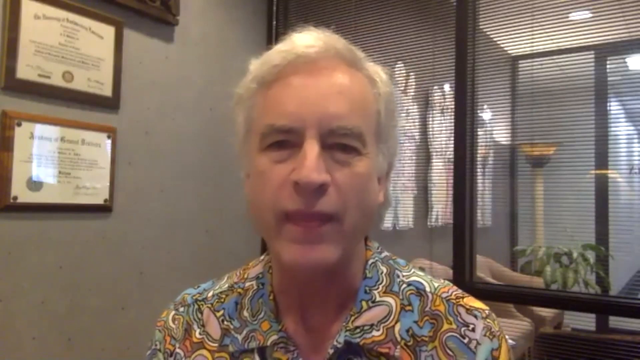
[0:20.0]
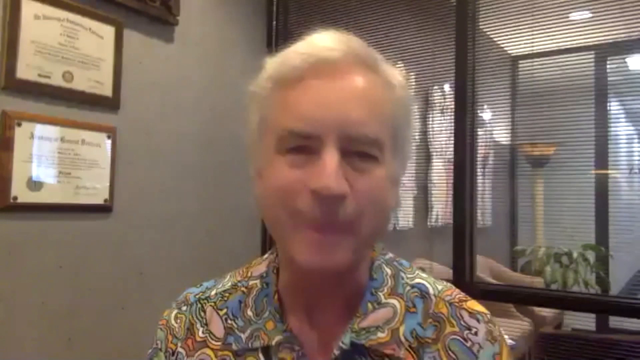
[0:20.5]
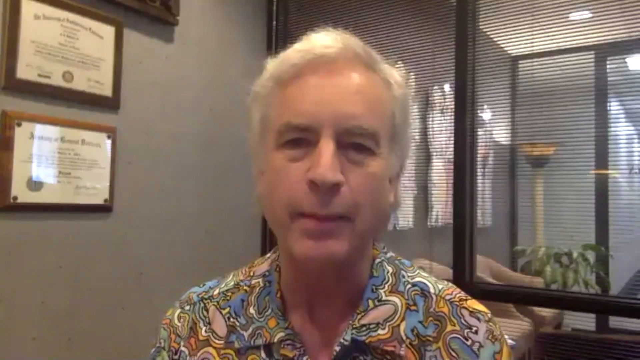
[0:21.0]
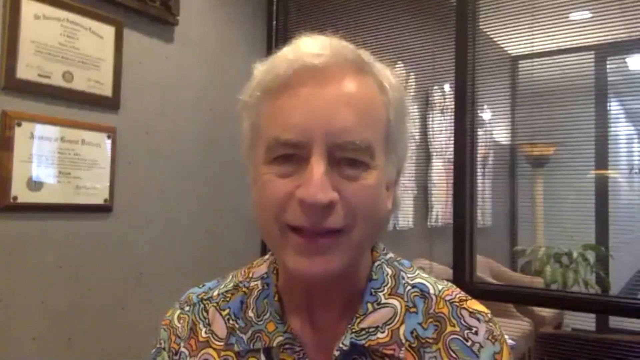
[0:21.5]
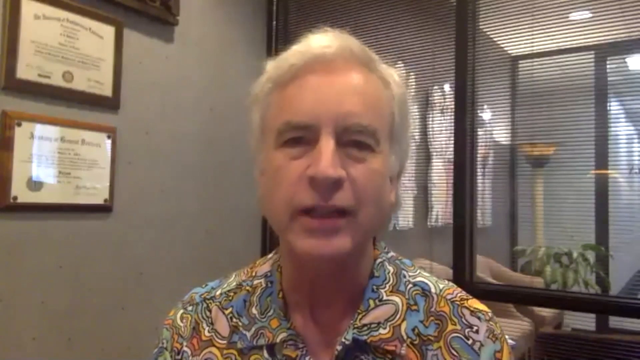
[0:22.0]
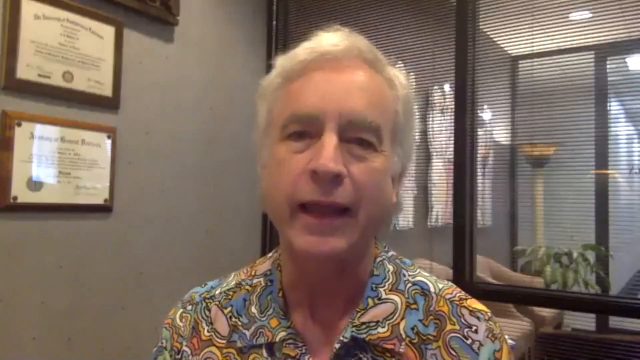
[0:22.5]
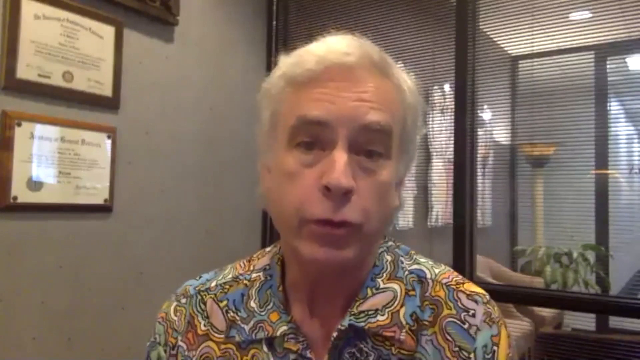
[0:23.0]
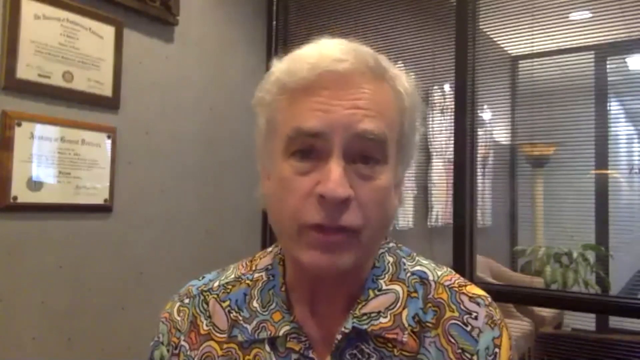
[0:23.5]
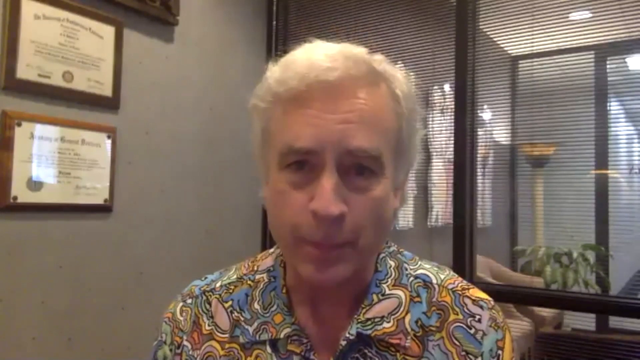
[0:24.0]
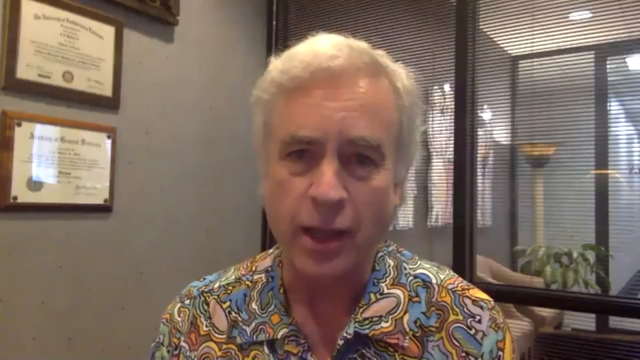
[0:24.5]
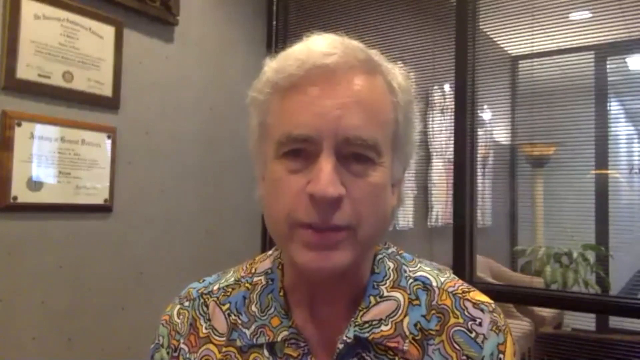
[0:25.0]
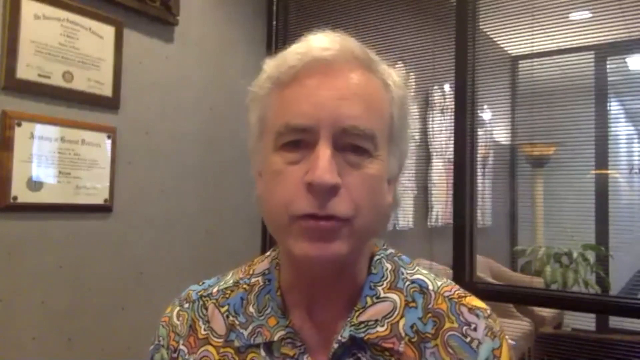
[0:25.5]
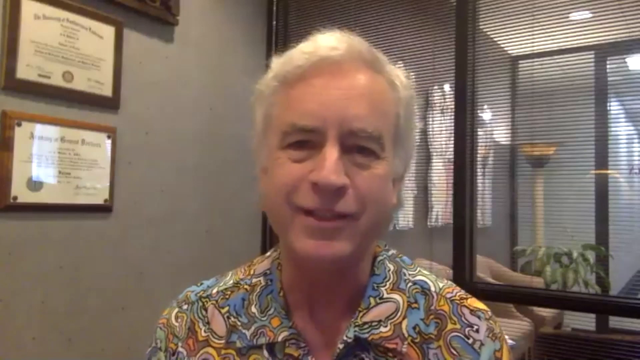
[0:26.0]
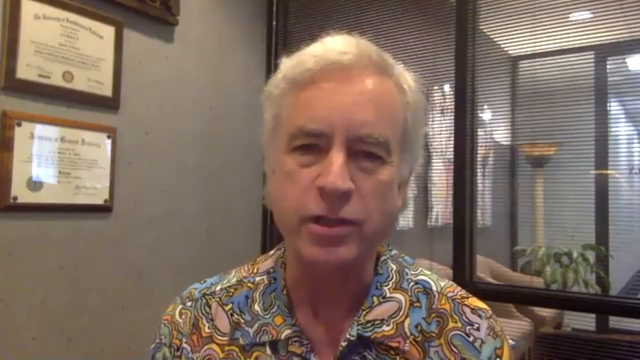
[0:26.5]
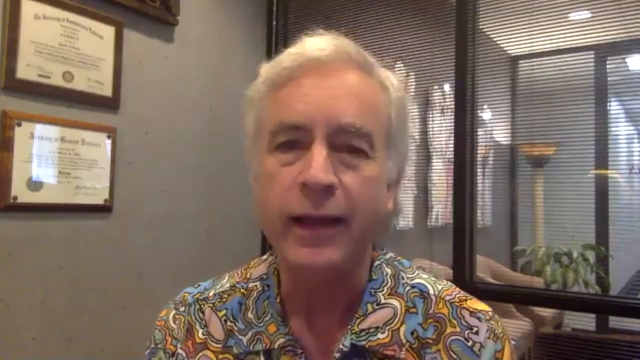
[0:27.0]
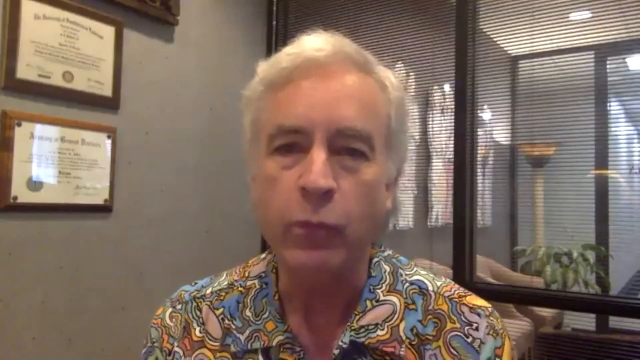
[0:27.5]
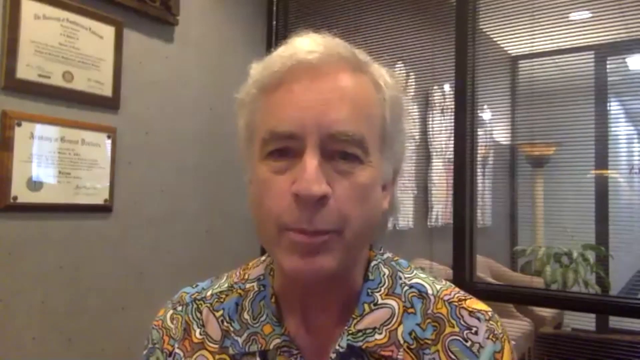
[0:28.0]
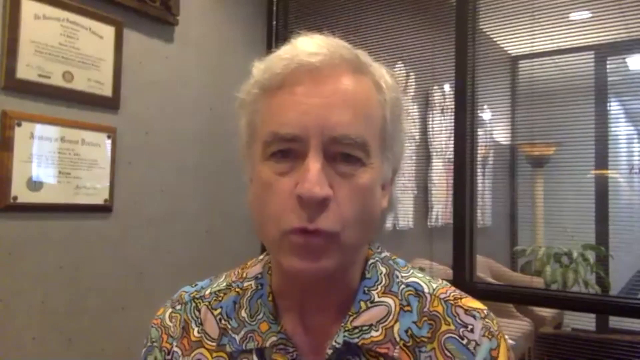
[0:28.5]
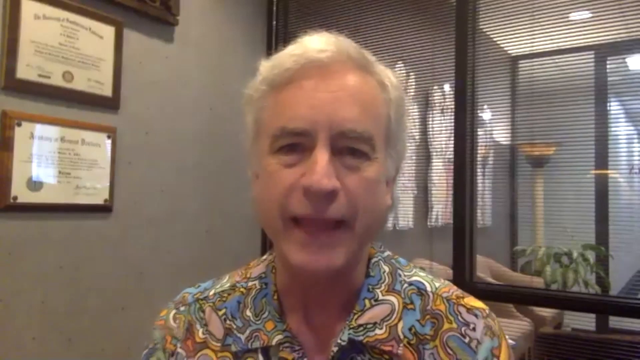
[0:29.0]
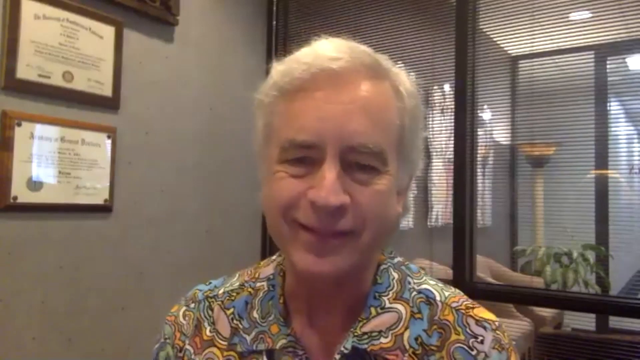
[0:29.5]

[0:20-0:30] The same man keeps talking, now nodding and raising his eyebrows as he speaks. He seems a bit more serious than before but still looks very passionate about what he is saying, and continues to speak at a similar pace, using facial expressions and some nodding to help engage his audience. Briefly, an image of some teeth appears that looks like a before and after.